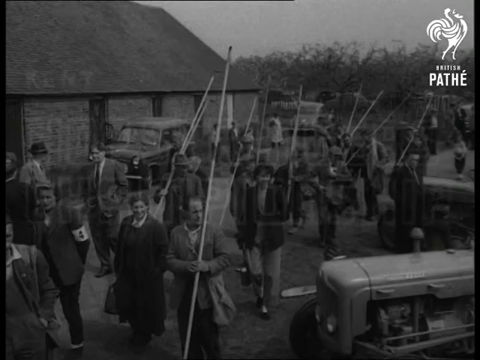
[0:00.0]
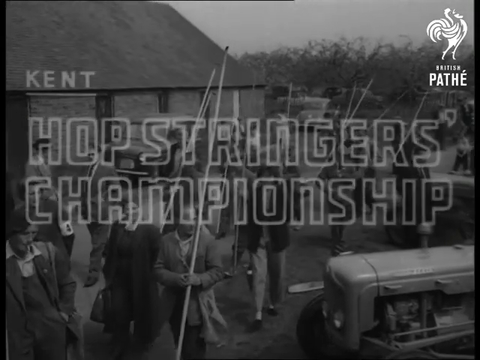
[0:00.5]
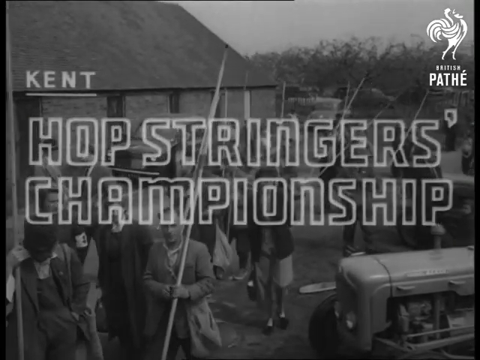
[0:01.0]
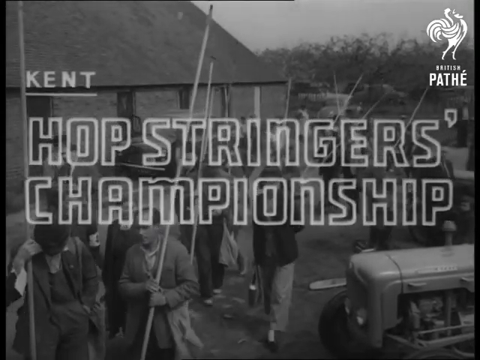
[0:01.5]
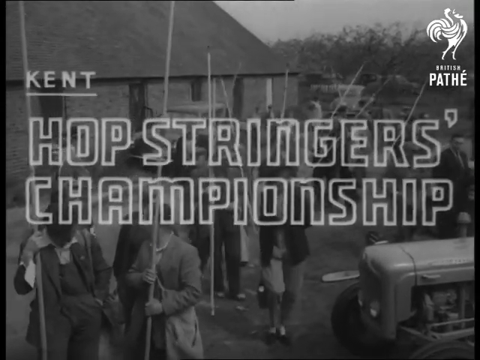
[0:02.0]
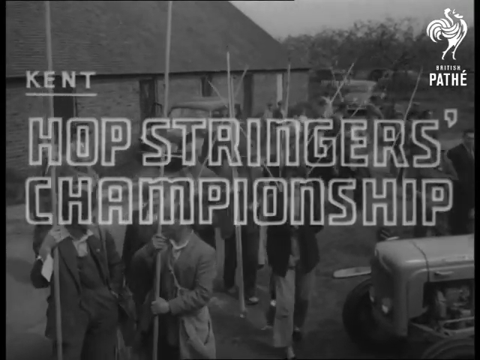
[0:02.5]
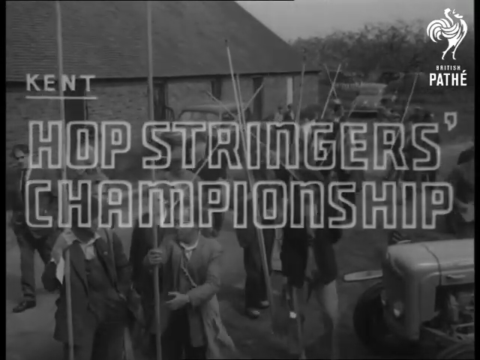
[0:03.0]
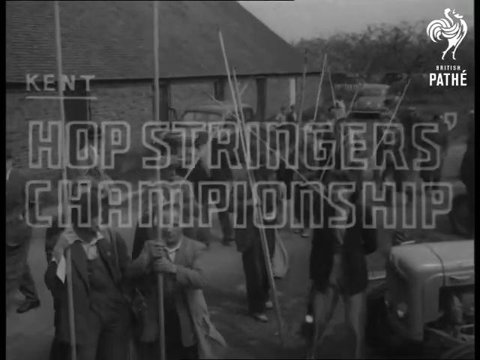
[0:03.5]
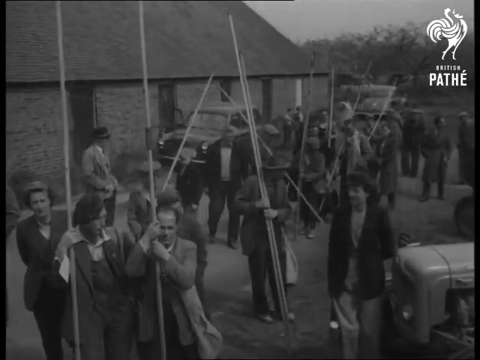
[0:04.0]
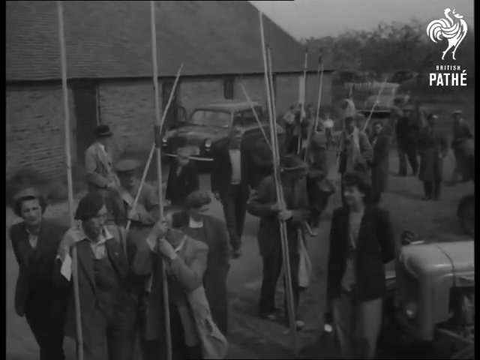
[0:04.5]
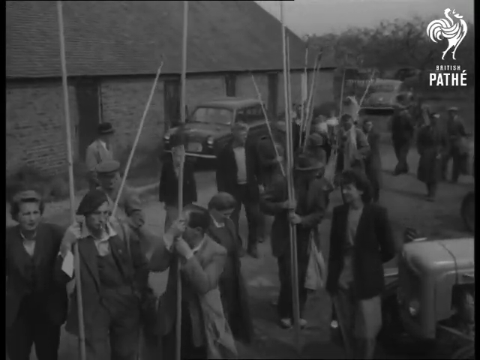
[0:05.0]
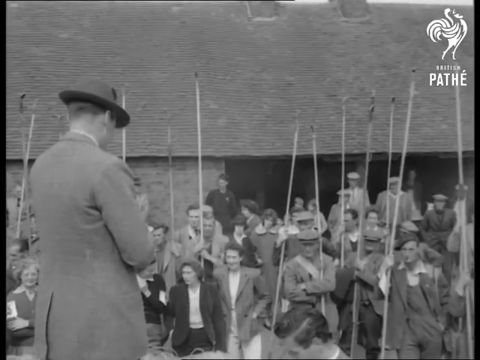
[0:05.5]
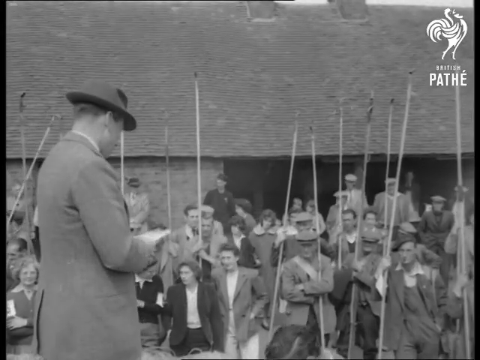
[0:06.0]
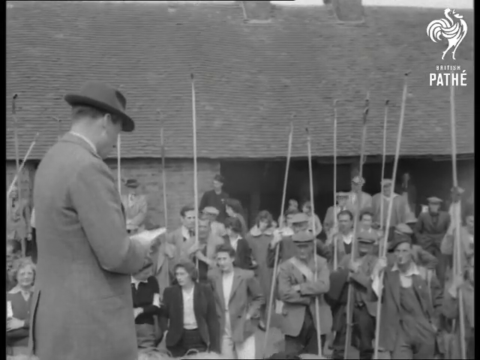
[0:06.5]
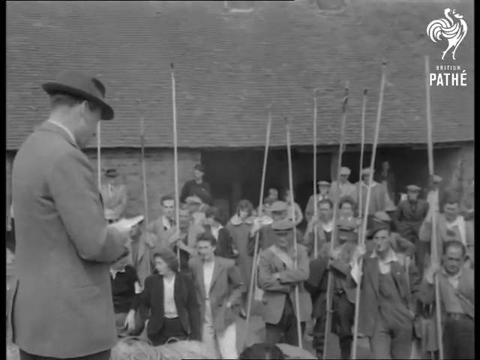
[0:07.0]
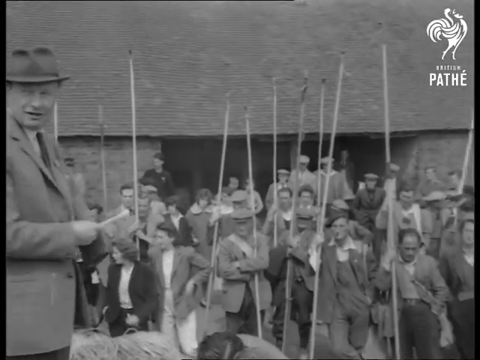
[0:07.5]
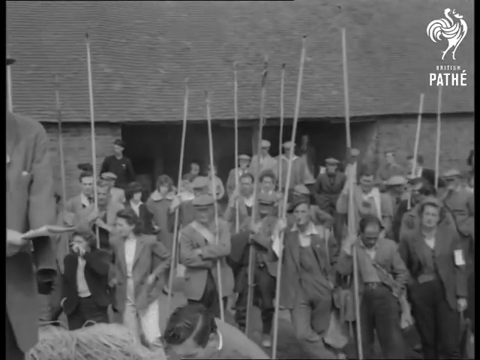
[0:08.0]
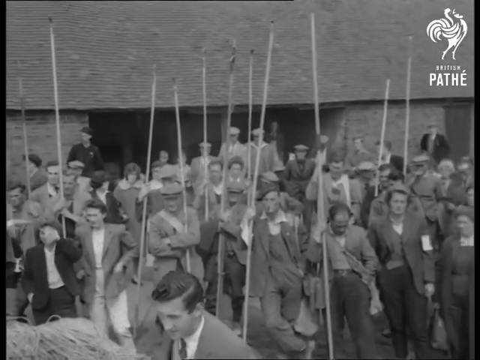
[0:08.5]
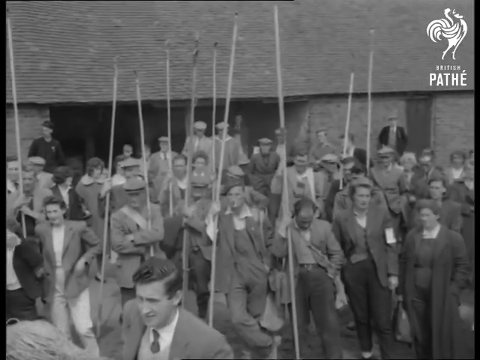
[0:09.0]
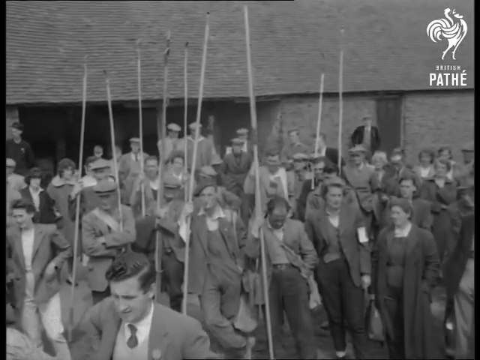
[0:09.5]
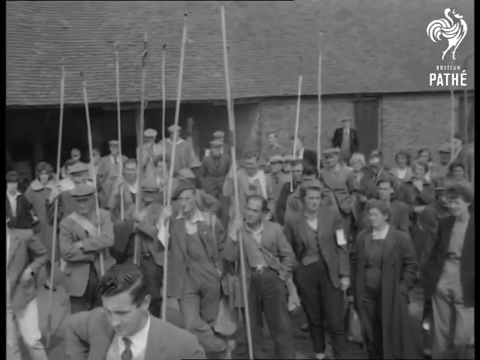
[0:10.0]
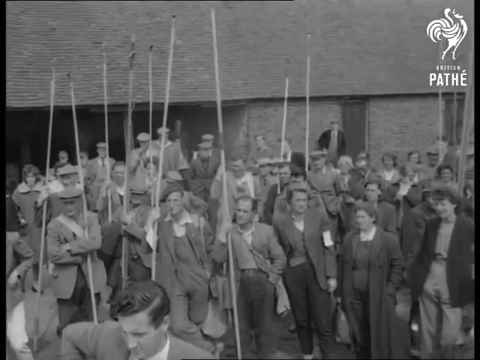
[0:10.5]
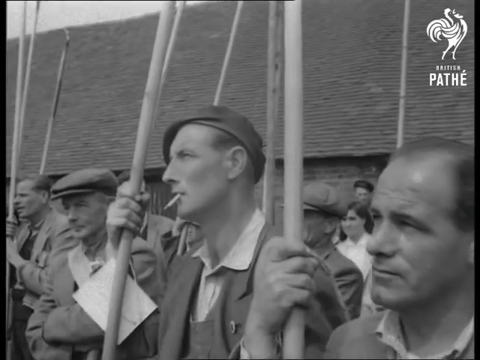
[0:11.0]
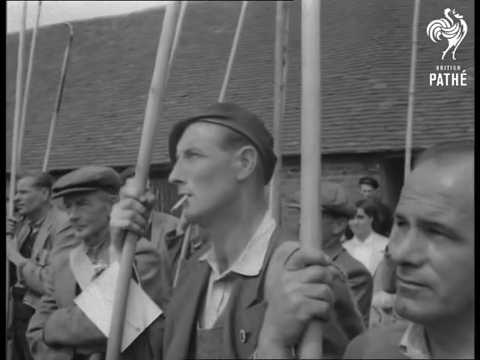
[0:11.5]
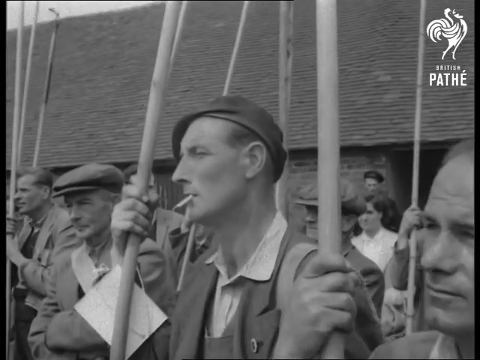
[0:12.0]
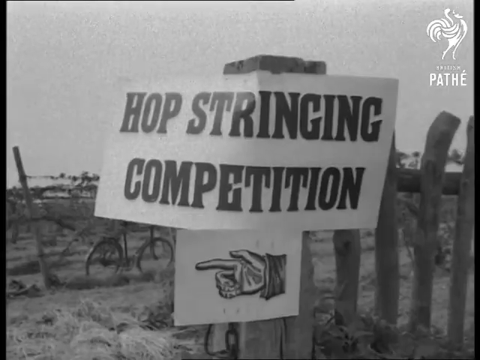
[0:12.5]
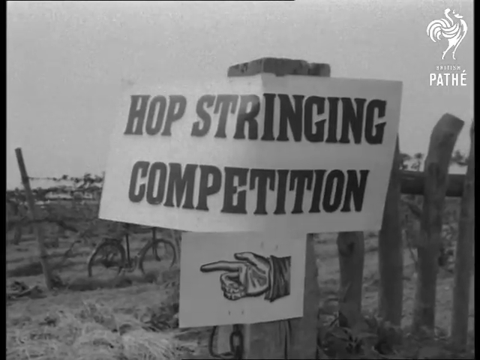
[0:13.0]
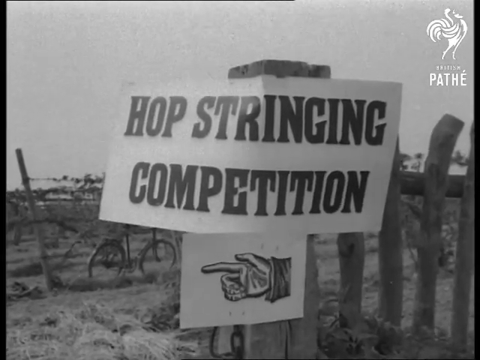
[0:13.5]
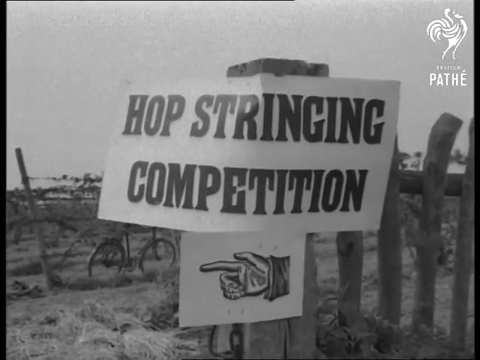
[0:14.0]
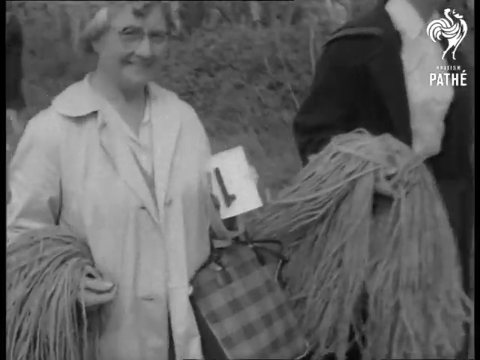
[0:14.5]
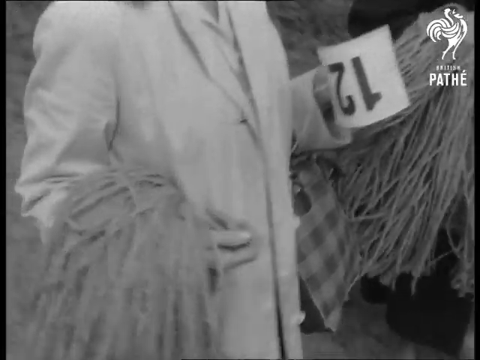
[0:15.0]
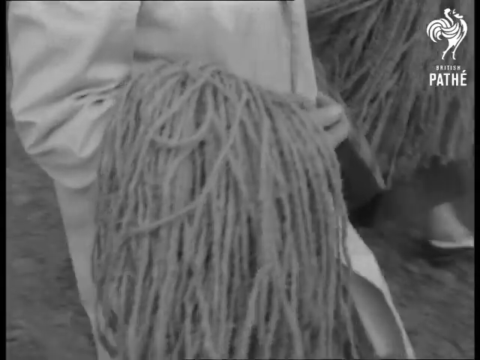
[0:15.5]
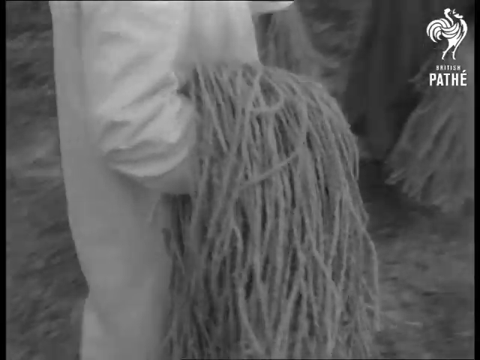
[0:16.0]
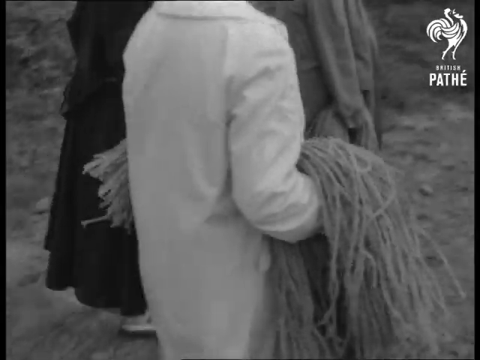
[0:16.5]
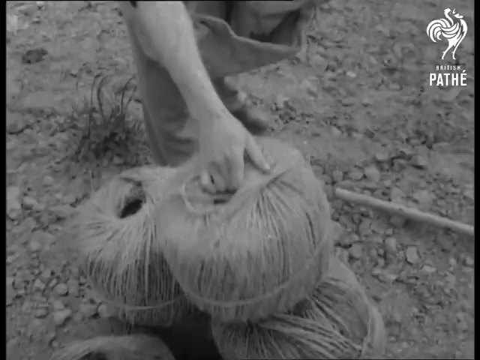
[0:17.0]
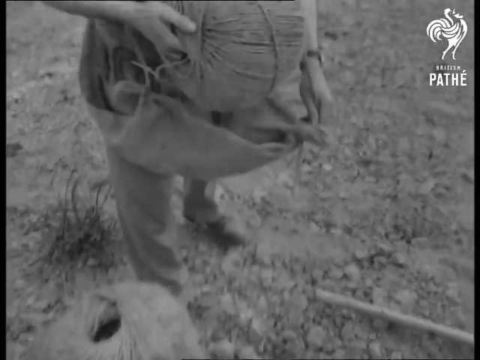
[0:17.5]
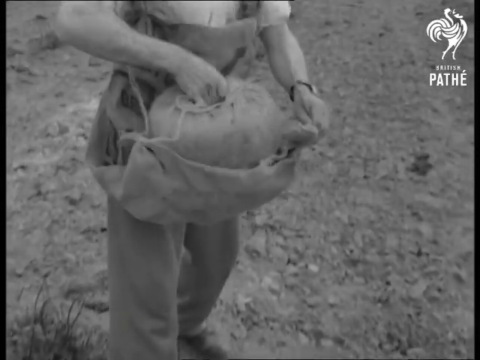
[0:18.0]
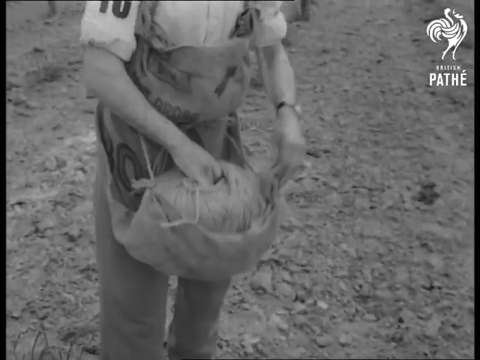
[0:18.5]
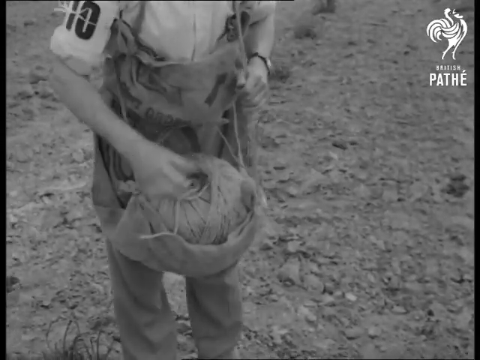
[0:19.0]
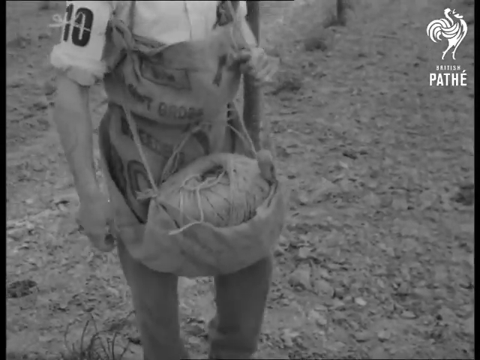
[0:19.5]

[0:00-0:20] A black and white film, apparently from around the 1940s or 1950s judging by the camera quality, opens with a caption in the center of the frame for a couple of seconds; it refers to a championship, but the top portion of the title is unclear. A "British Pathé" logo is in the upper right corner. Outdoors, a line of people each hold a pole that appears white or light-colored. The people holding the poles are men in suits and hats. Women are also present, wearing what look like suede pants, but none of them hold a pole. A man, sort of at a podium, talks directly to the crowd, who are all holding the poles. A sign on a fence reads "hop stringing competition".